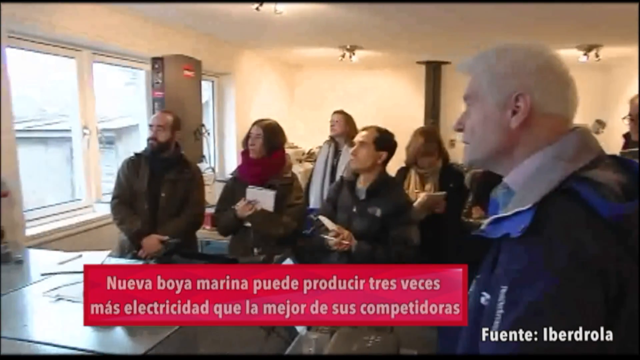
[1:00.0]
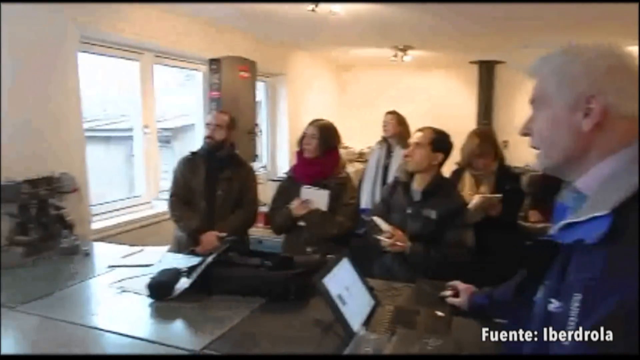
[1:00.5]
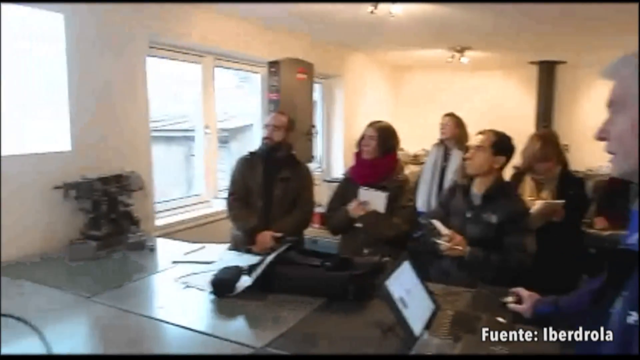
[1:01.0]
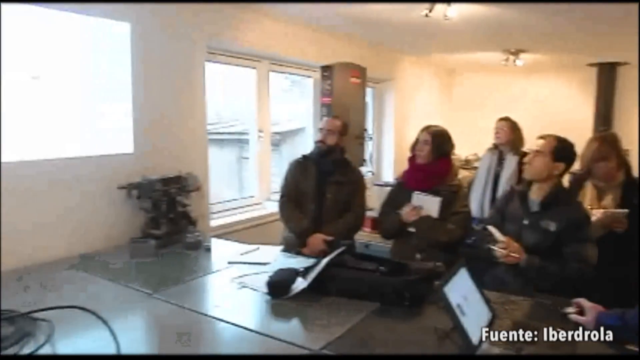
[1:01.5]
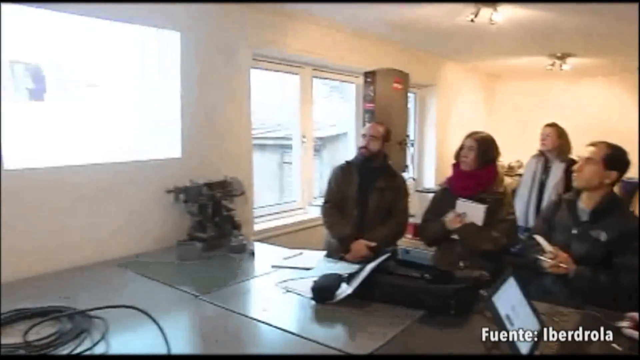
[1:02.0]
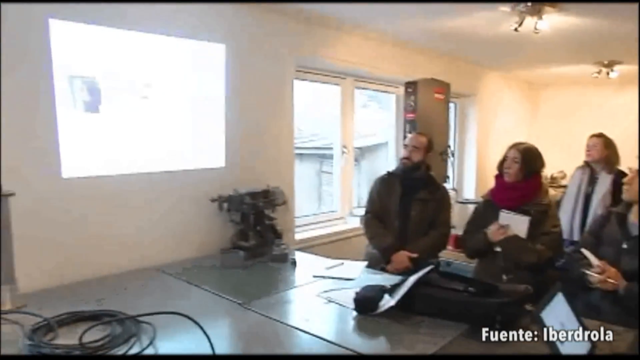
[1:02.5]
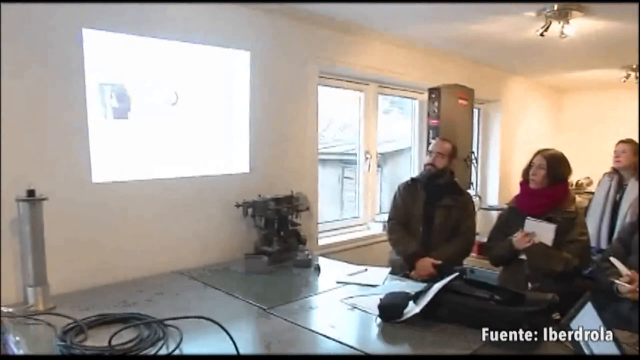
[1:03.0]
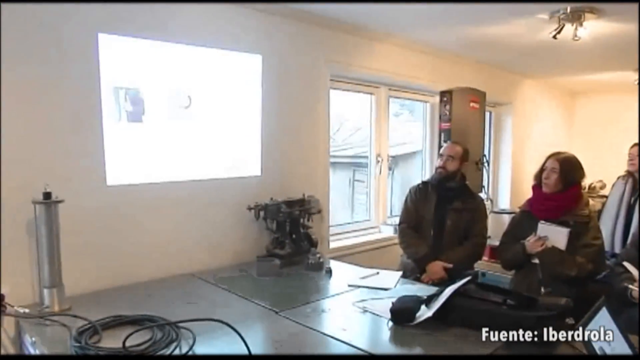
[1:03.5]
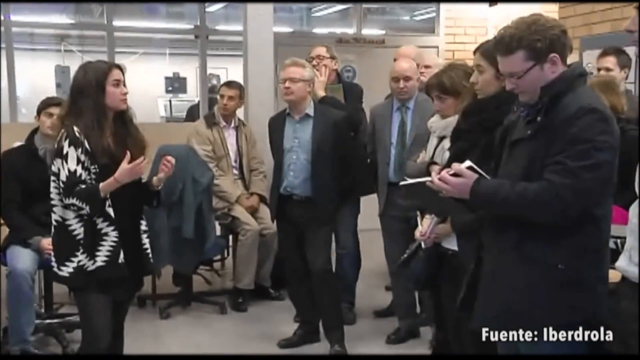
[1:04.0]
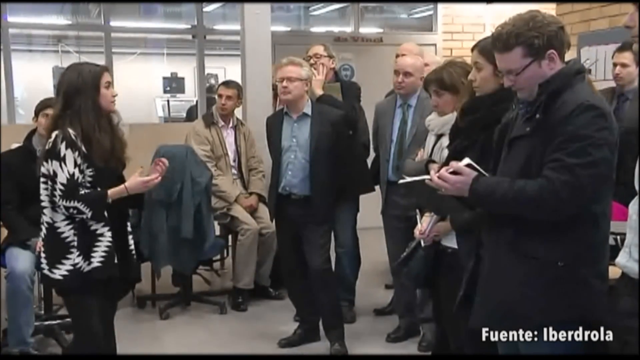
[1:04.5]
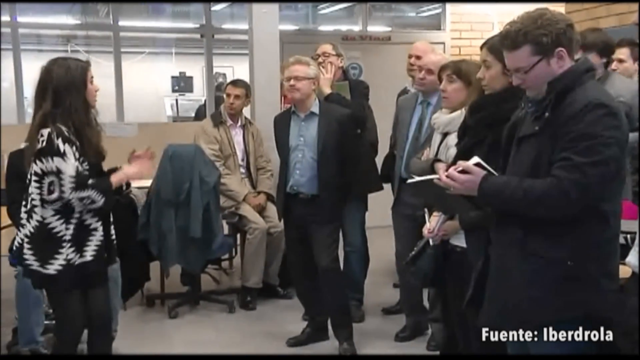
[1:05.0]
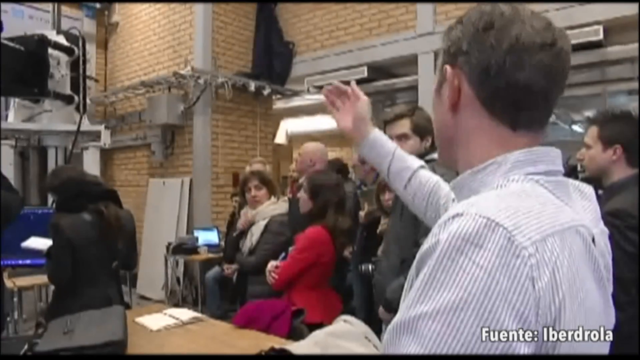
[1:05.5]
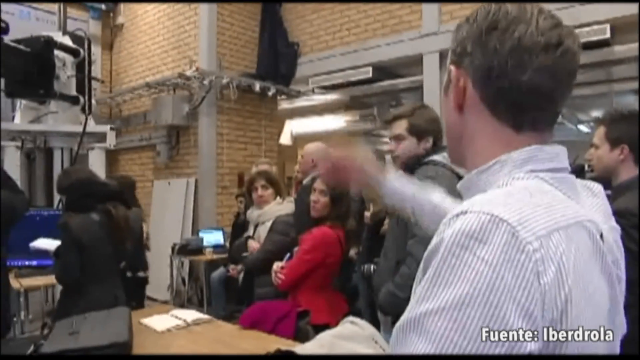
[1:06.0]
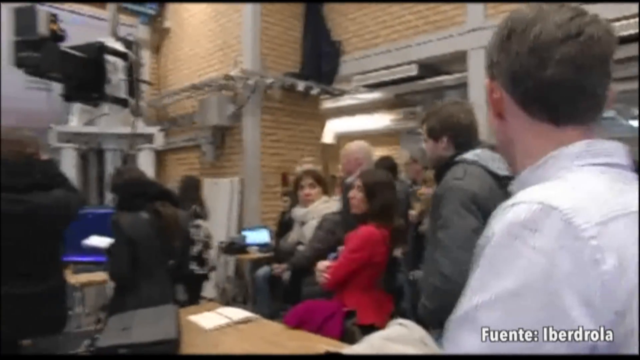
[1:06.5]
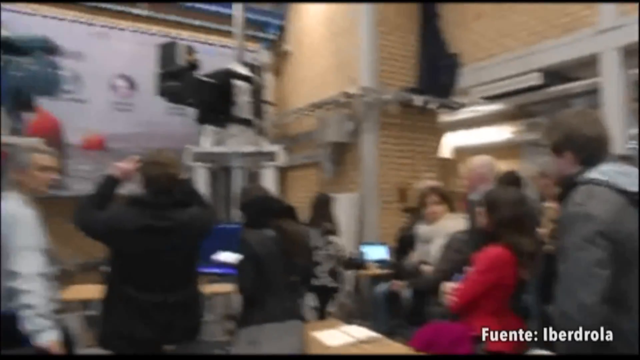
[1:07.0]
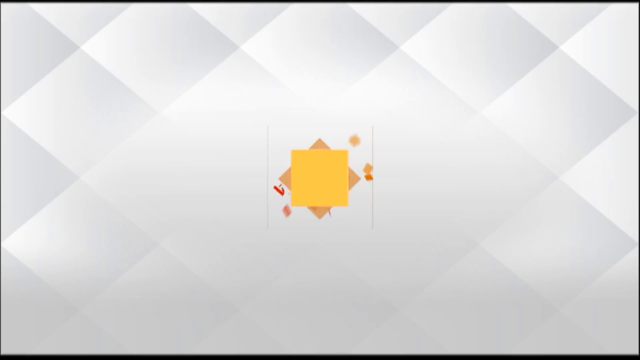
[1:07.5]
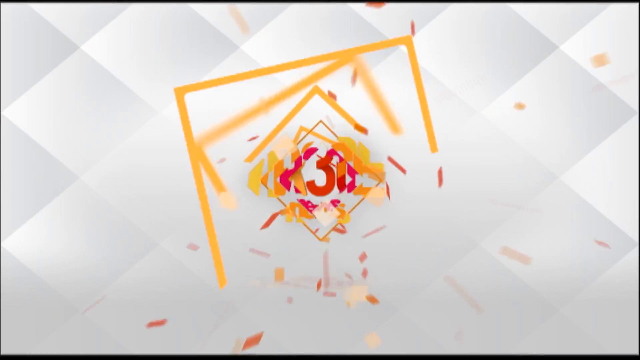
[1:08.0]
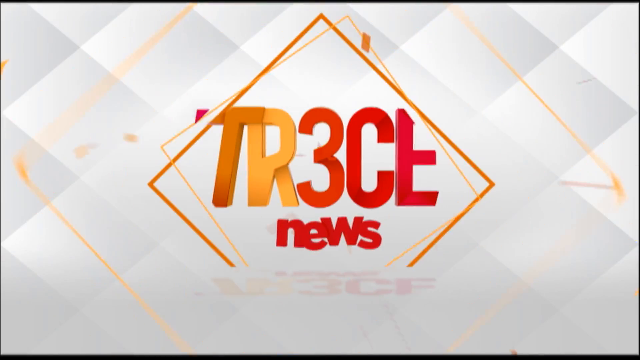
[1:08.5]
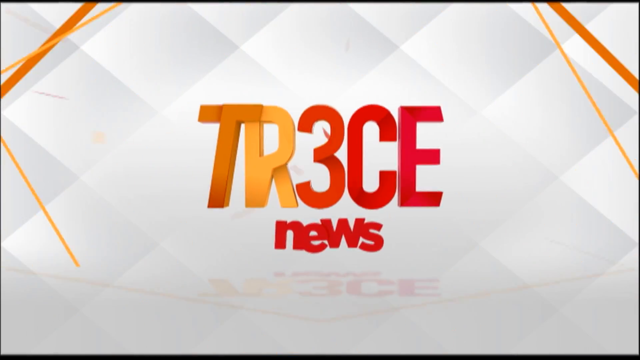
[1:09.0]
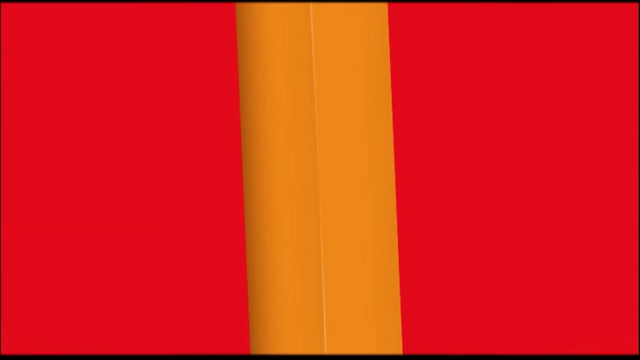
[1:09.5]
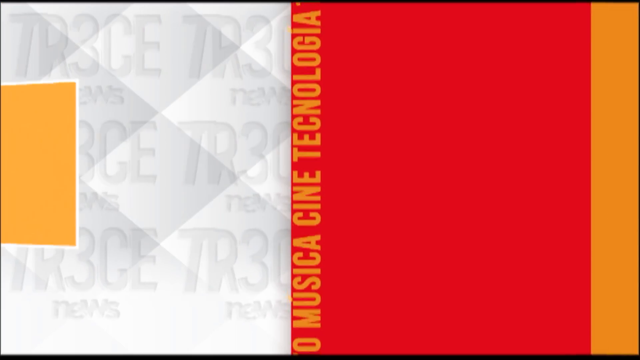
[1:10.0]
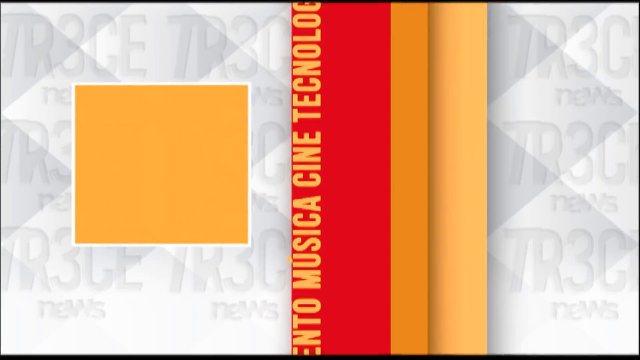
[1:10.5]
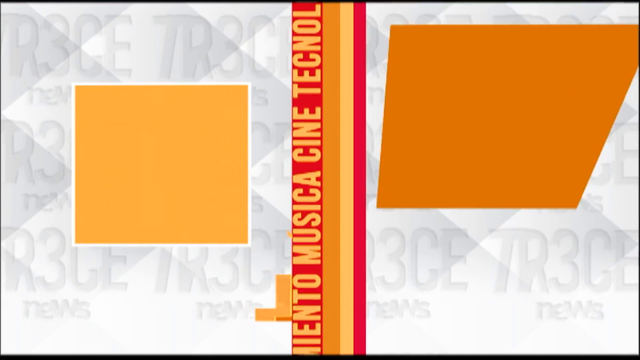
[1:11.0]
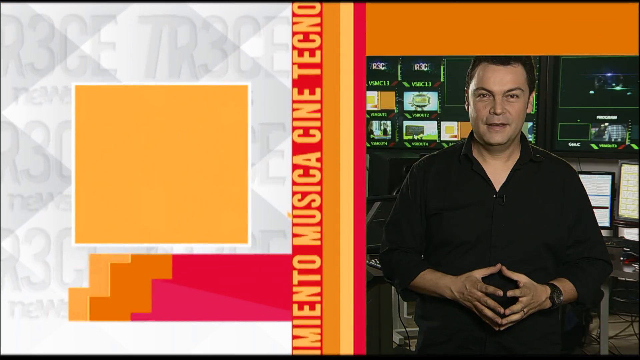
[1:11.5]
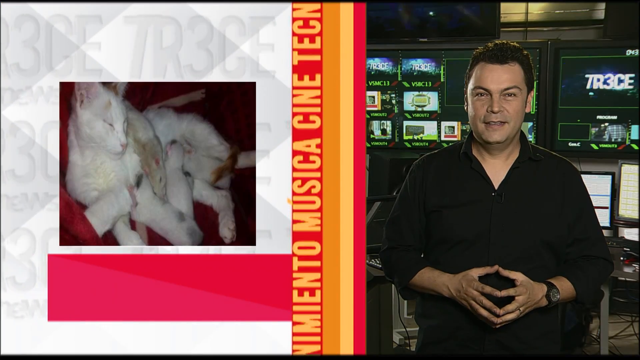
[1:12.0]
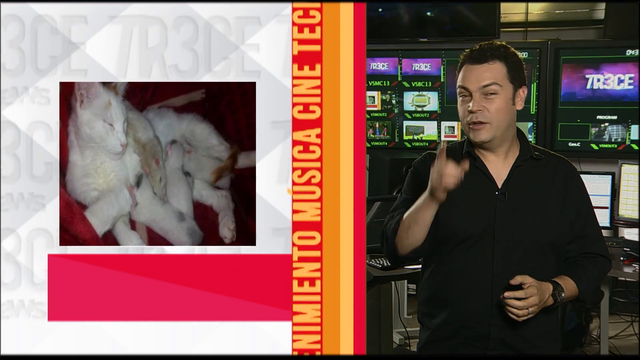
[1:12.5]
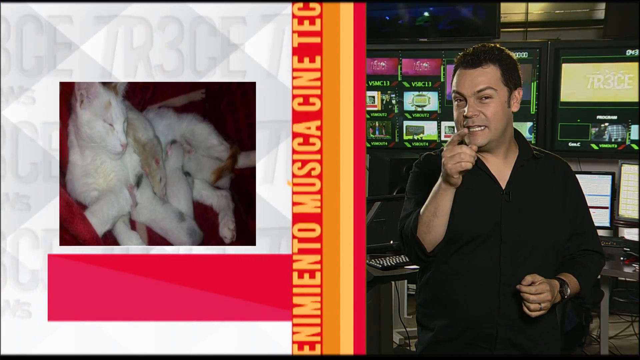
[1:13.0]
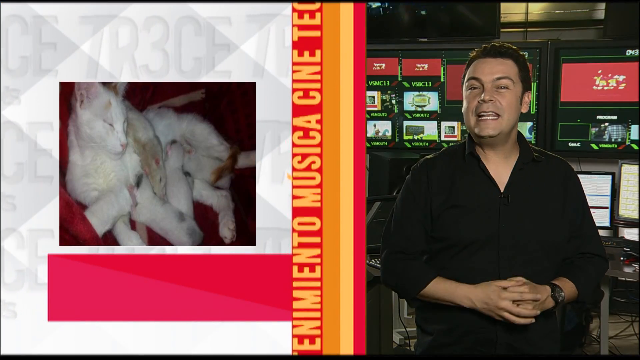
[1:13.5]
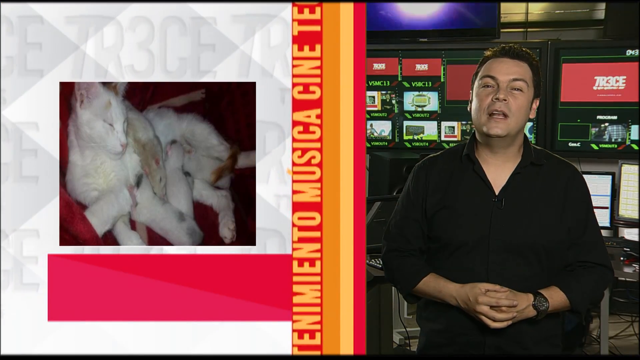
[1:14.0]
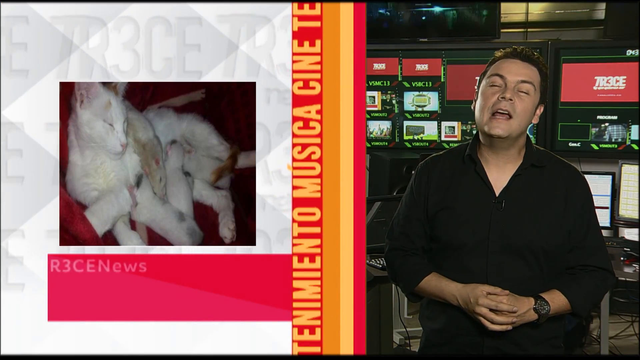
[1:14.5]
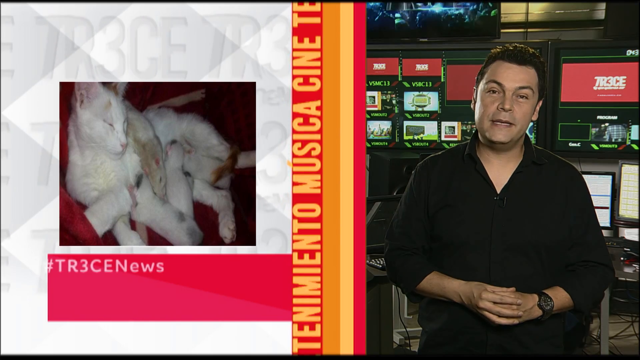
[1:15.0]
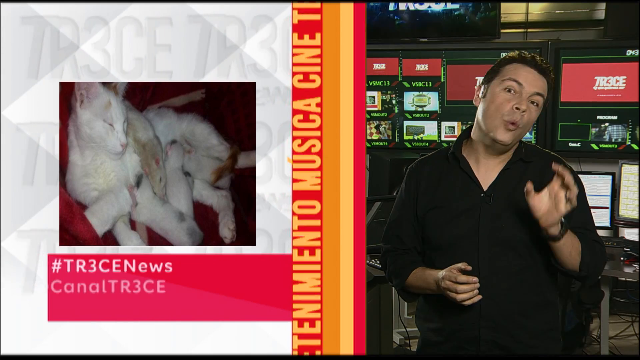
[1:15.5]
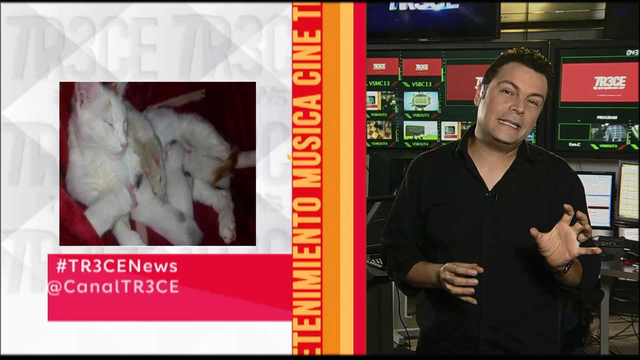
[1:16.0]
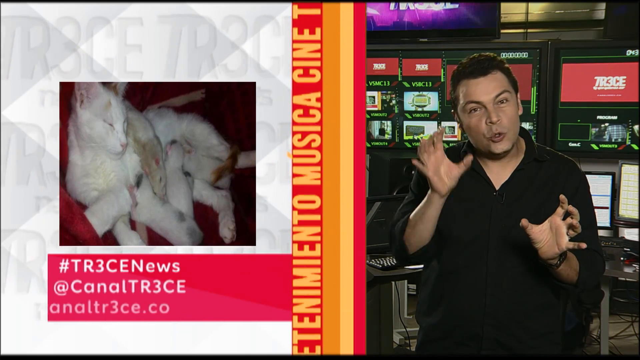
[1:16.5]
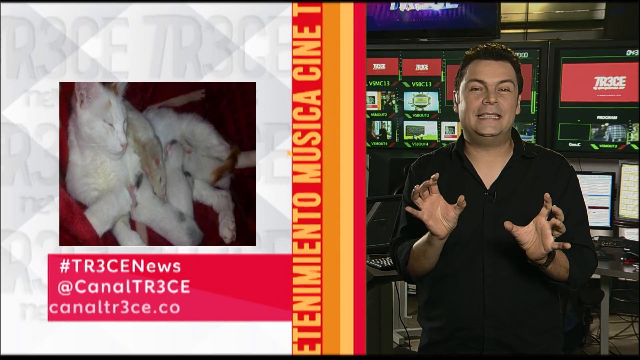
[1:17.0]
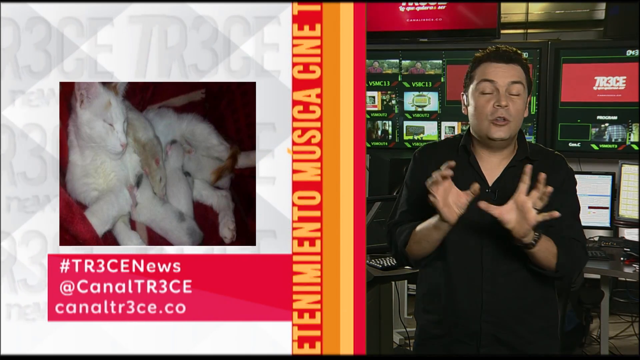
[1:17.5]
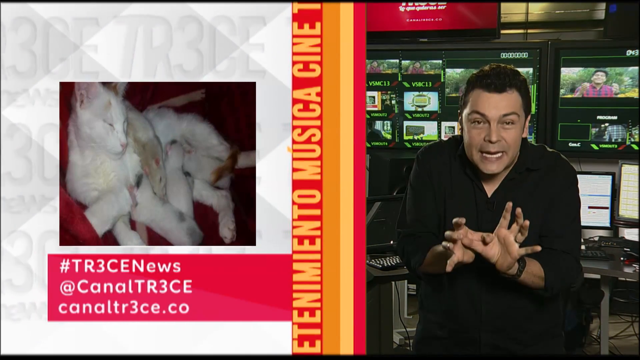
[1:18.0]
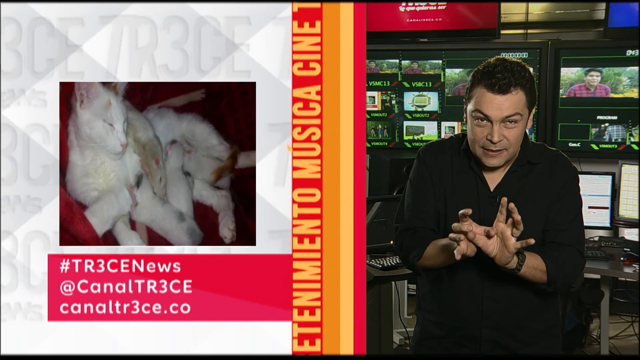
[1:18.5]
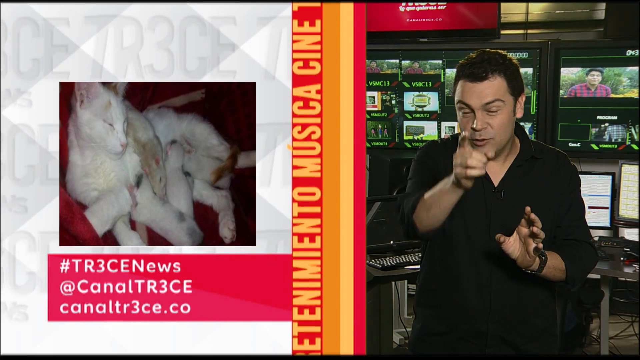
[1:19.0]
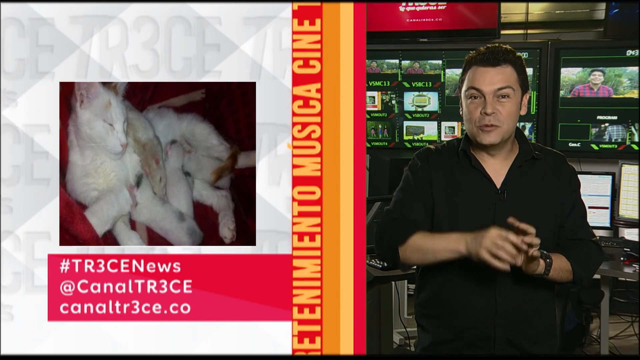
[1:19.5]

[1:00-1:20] On the right side of the frame, a man with white hair has his eyes glued to a screen, which is not visible. Other people are in the room, around seven, among them three women and the rest men. The white-haired man wears a blue jacket with a white collar, with blurry, unreadable writing on it. Another man at the far end has a mustache and black hair and wears a black coat over a full-neck sweater; he is also glued to the screen and seems interested in what is going on there. A woman wears a red scarf and a brown jacket and has long black hair flowing down her back. Someone holds a white, well-stuffed book against the chest. Another man holds a pen and a book; he wears a black jacket without a hood and has black hair. In the background, a woman wears a white scarf. The room is well lit with chandeliers.